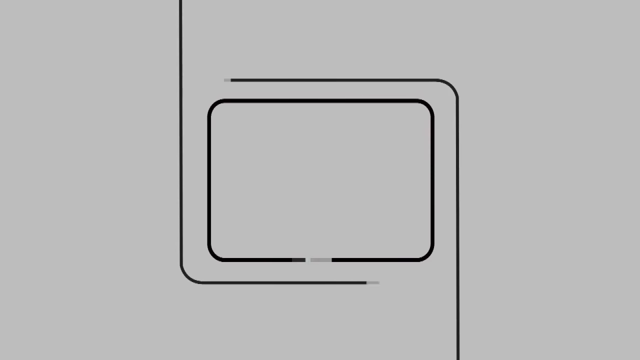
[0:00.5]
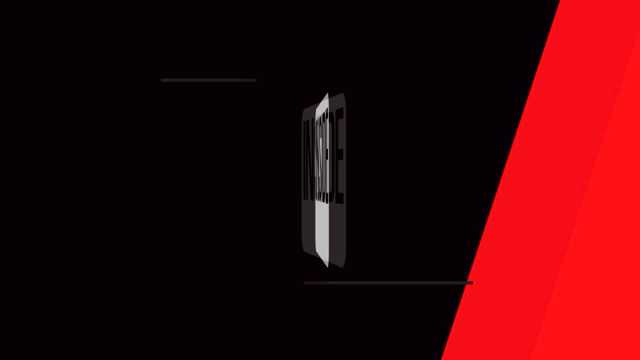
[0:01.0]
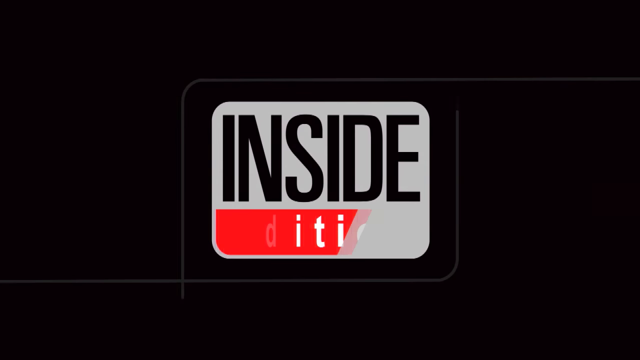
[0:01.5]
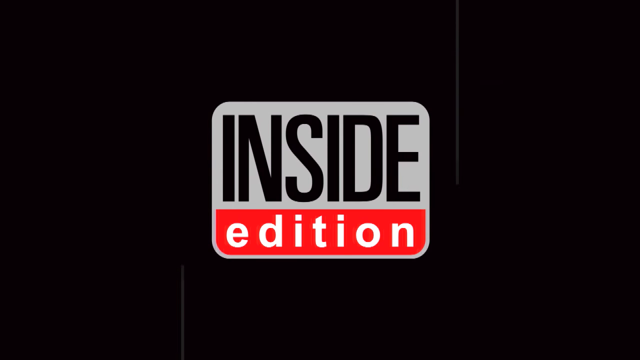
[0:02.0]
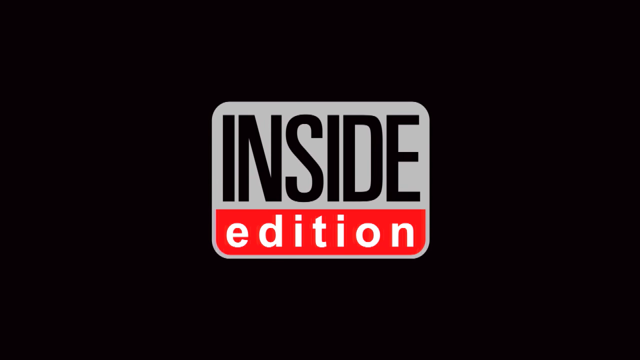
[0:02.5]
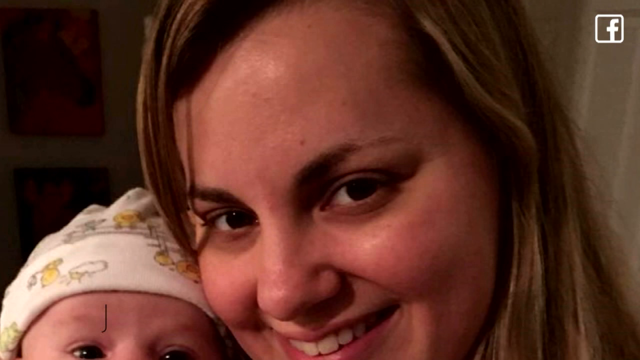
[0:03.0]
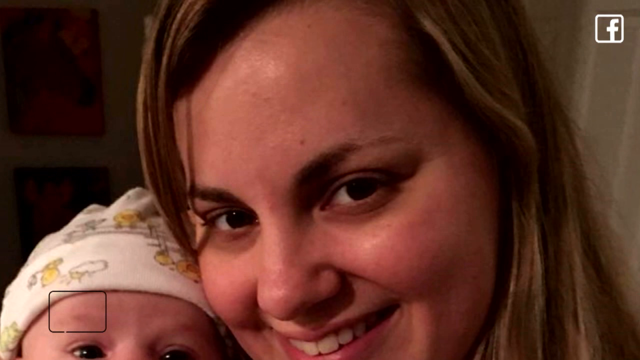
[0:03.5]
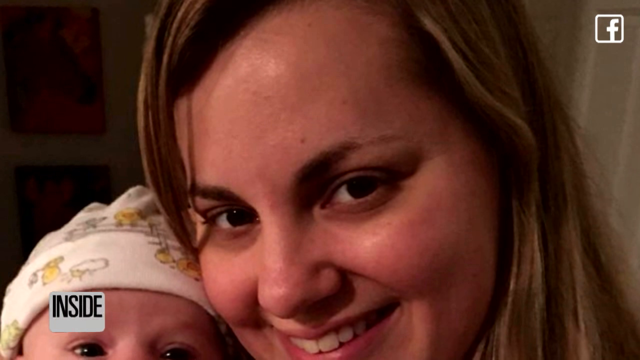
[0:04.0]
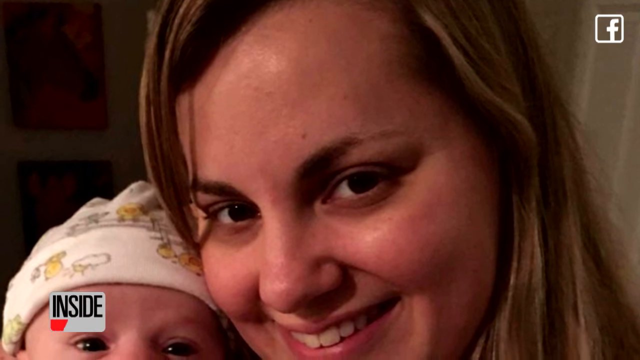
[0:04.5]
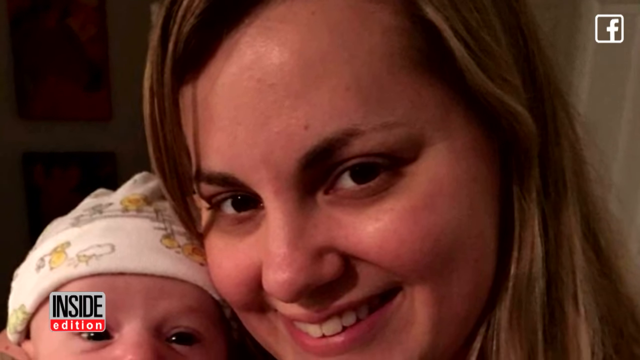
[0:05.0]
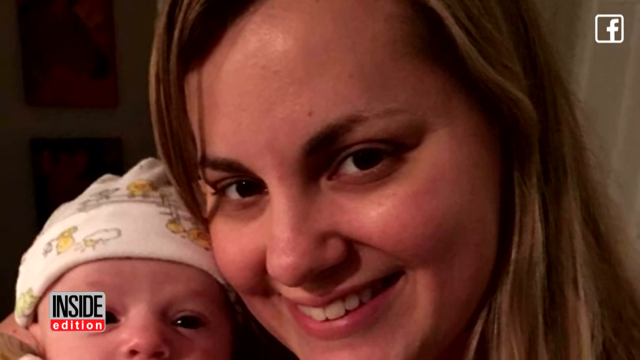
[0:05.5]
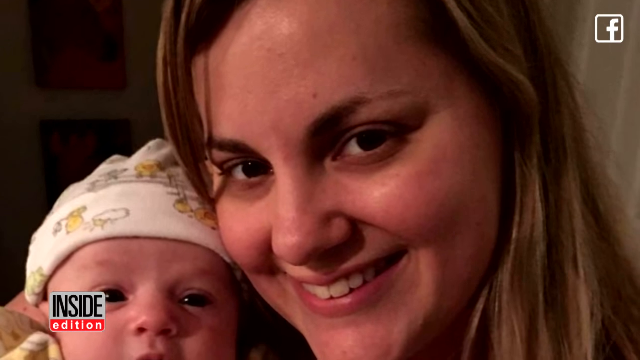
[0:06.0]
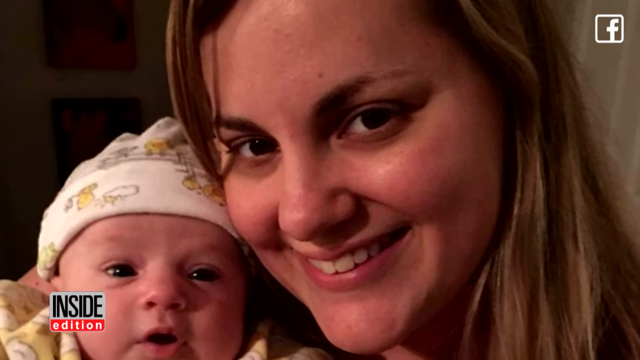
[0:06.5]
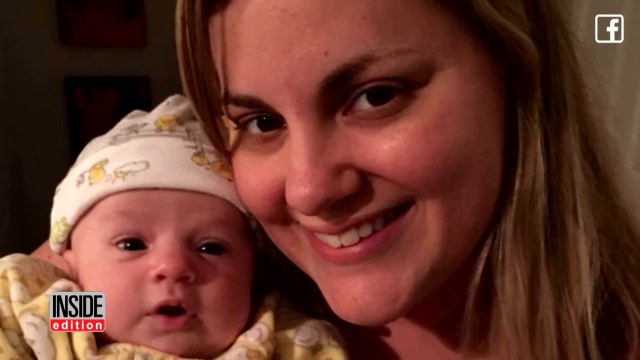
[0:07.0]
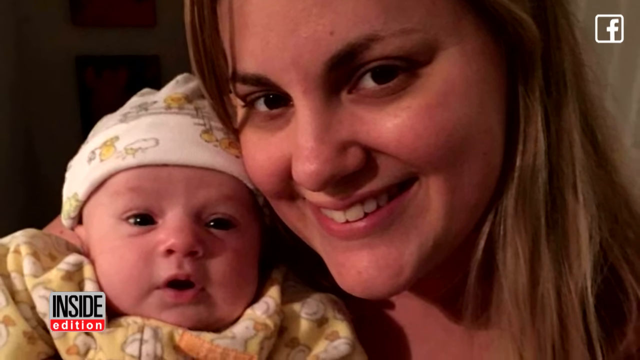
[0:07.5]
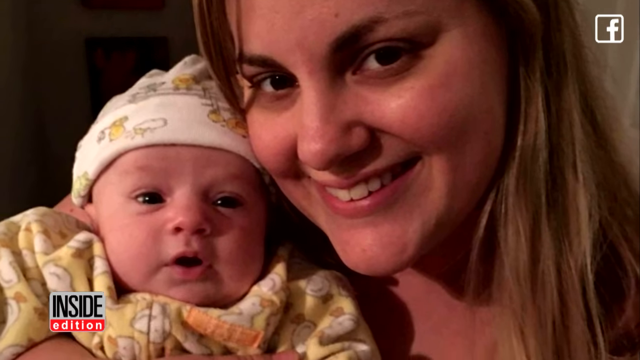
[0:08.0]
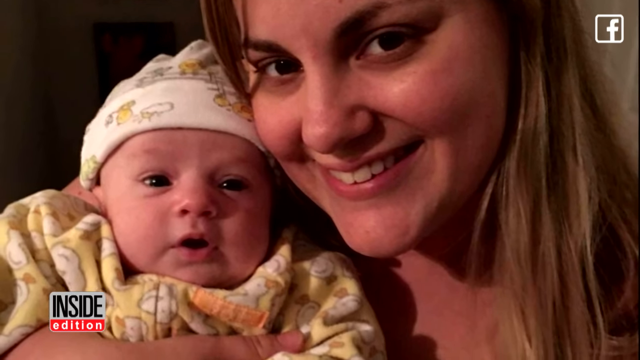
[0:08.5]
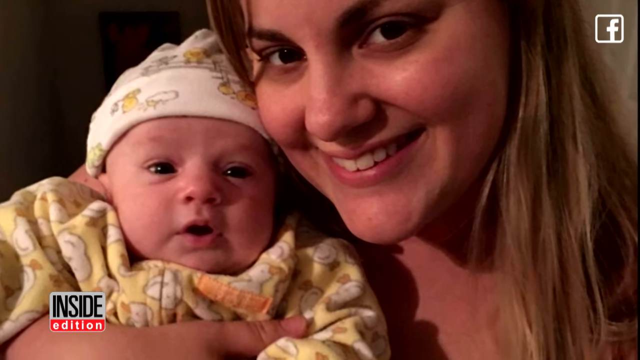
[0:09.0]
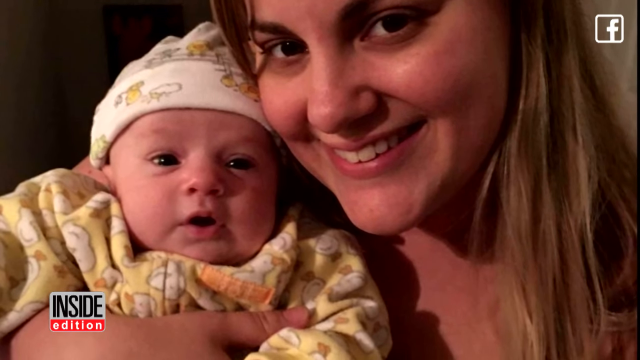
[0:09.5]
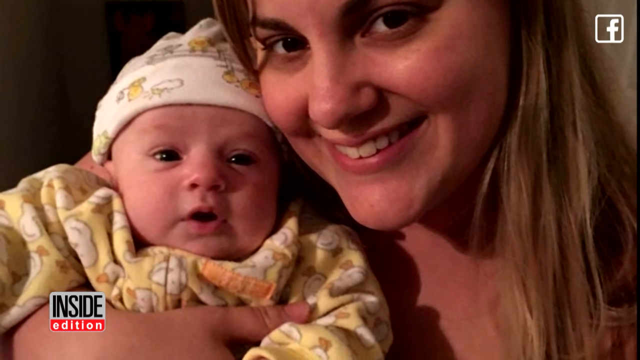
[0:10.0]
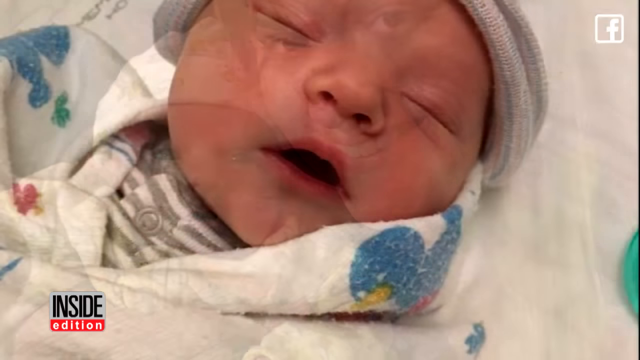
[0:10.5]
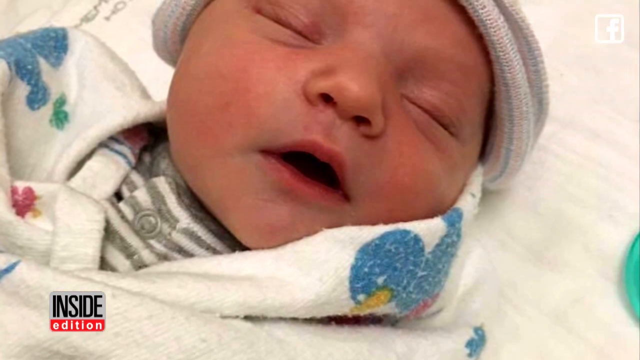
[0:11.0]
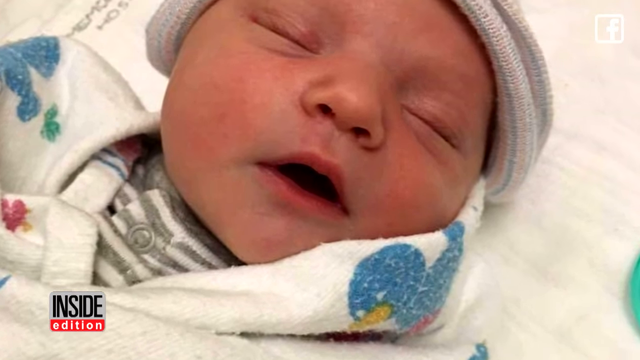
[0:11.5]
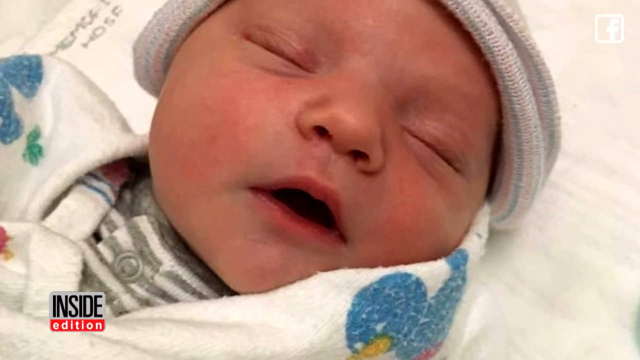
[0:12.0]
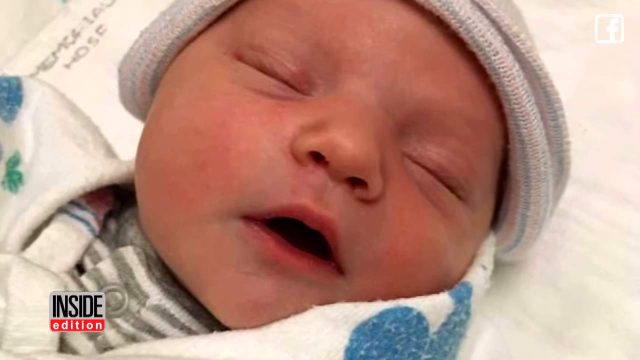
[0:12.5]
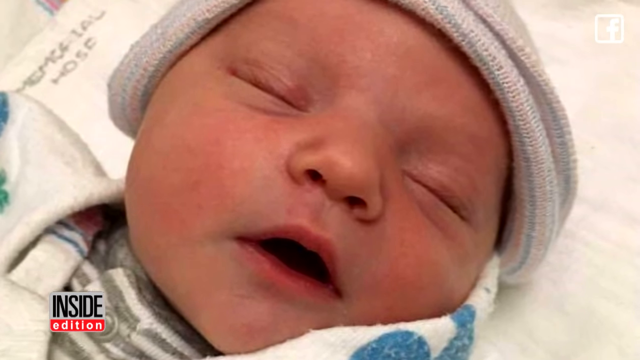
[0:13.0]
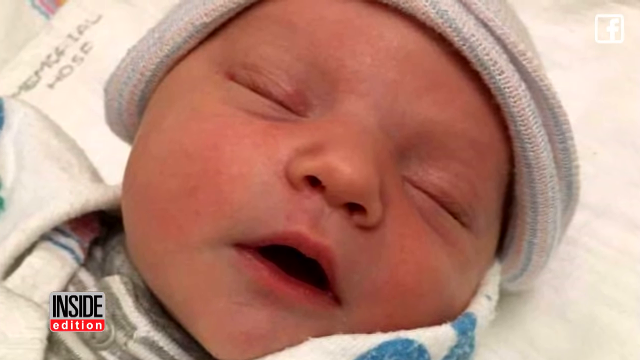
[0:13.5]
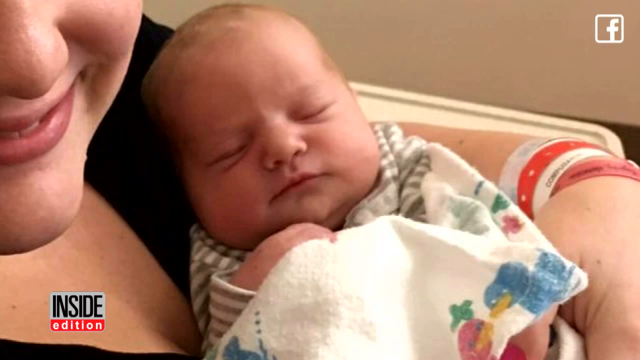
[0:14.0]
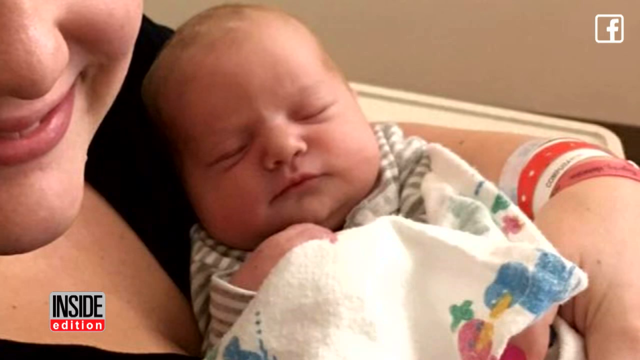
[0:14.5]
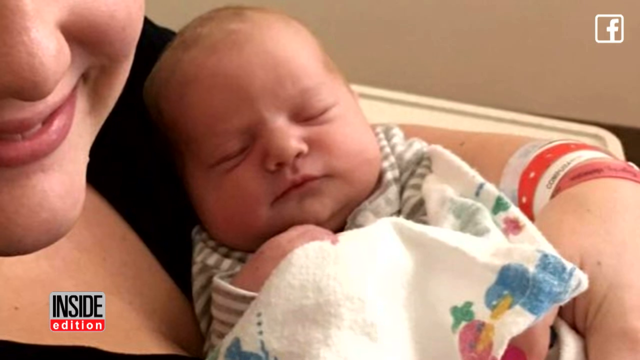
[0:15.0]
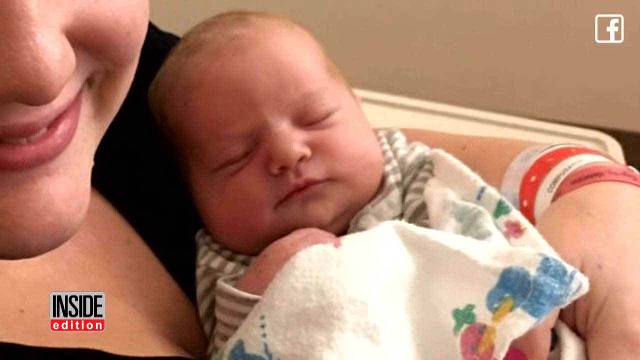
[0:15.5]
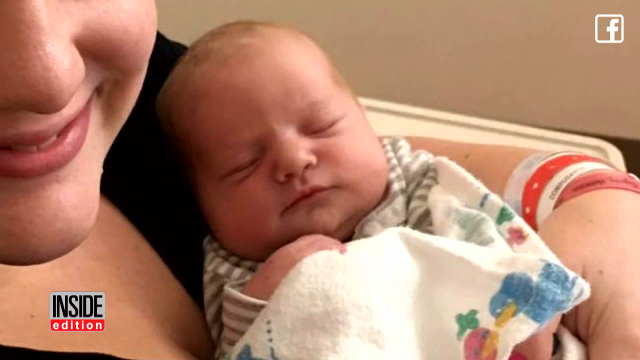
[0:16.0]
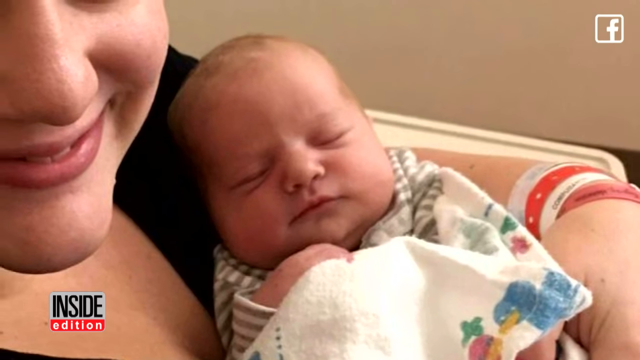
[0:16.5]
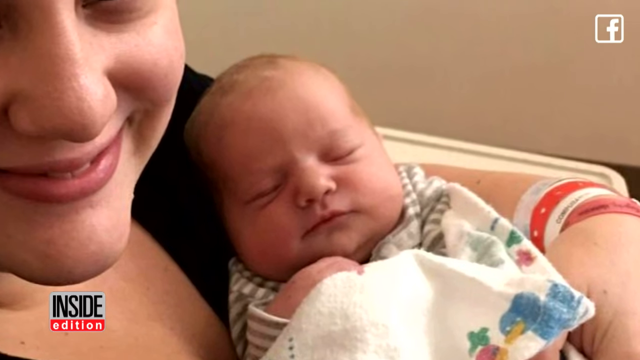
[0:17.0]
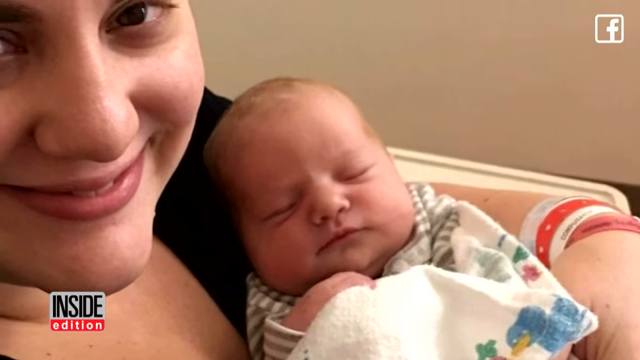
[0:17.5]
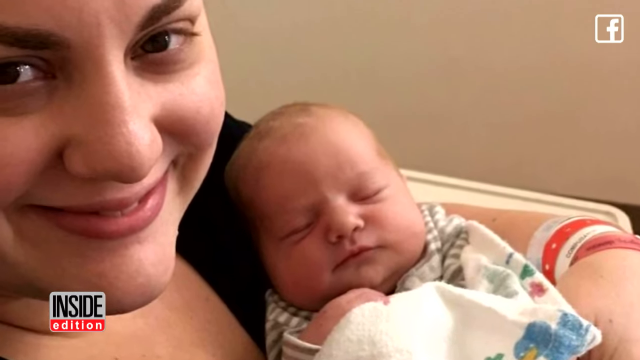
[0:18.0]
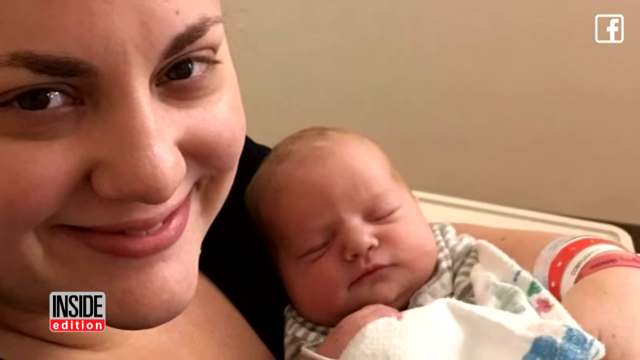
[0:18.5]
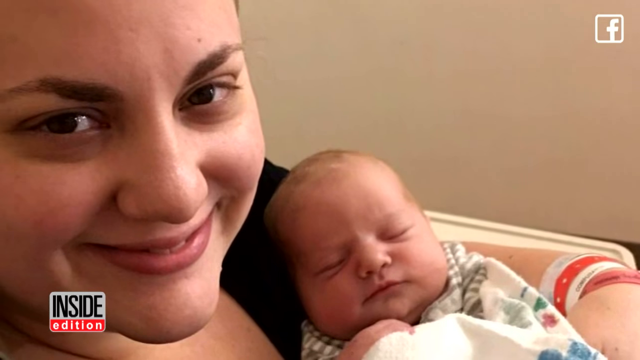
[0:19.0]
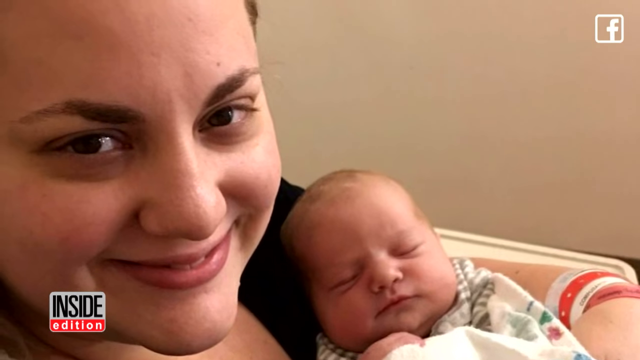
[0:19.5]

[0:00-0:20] The video is about a mother with cancer who breastfeeds. It shows a picture of a mom and her newborn baby; the baby wears a hat and a little onesie, and both are smiling. A close-up picture of the baby follows, the baby's eyes squeezed shut, with the mom holding the baby and smiling for the camera. A large Inside Edition sign flashes in the middle of the screen, and afterward it stays in the bottom left corner. Another picture shows the mom in the hospital wearing her hospital bands, and another shows them out of the hospital. Text in the bottom right corner says you can subscribe to Inside Edition. The pictures are all of the mom smiling with her baby, looking very happy and content. In the picture with the baby in the onesie and hat, the baby's eyes and mouth are open, while the other pictures show the baby with eyes squeezed shut, apparently sound asleep. The video then goes back to the Inside Edition sign again.